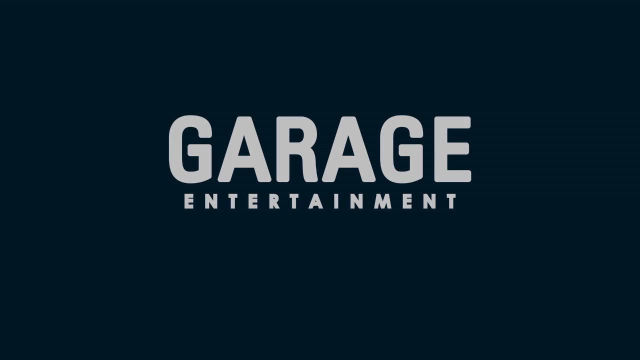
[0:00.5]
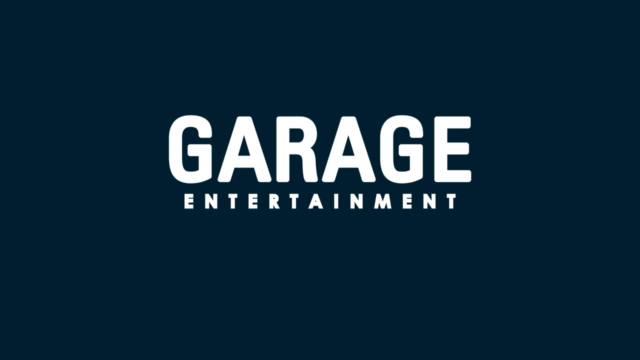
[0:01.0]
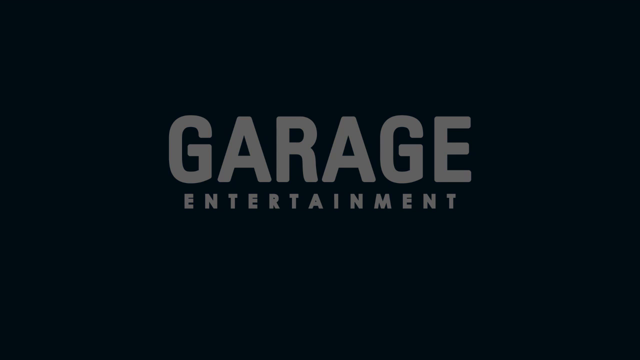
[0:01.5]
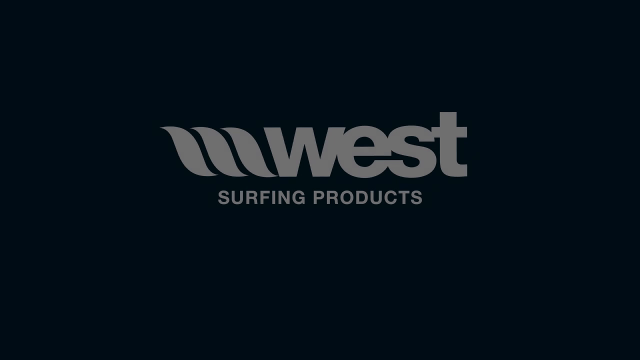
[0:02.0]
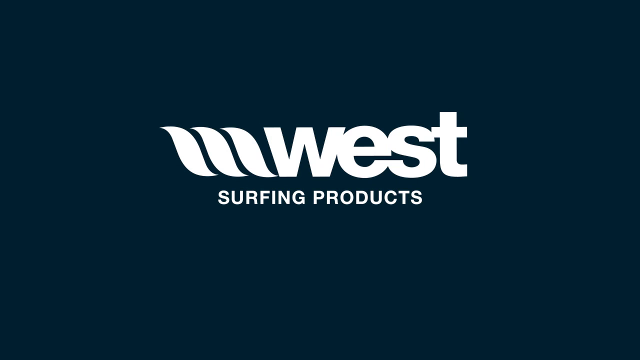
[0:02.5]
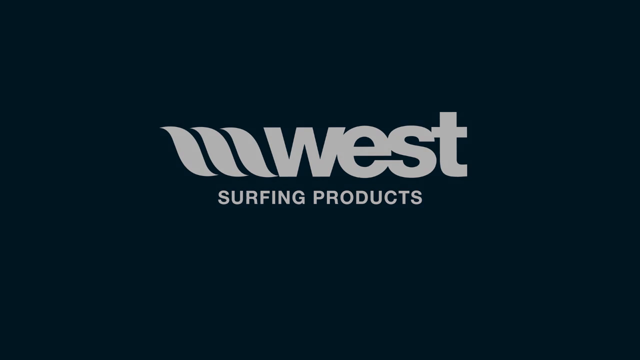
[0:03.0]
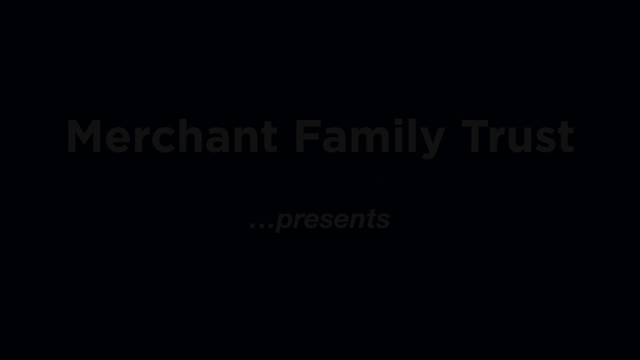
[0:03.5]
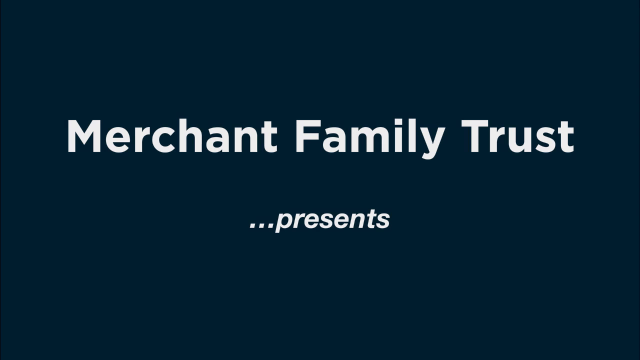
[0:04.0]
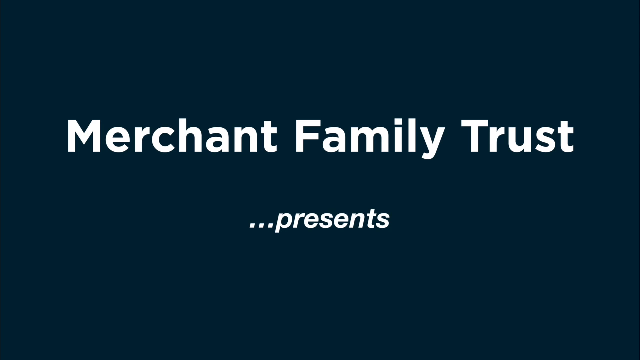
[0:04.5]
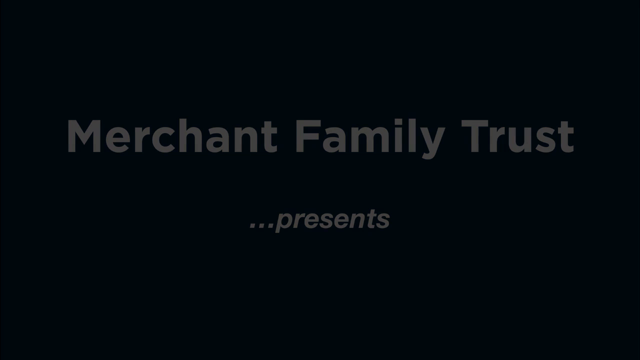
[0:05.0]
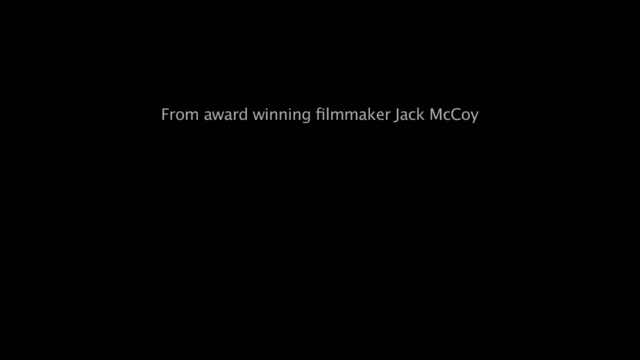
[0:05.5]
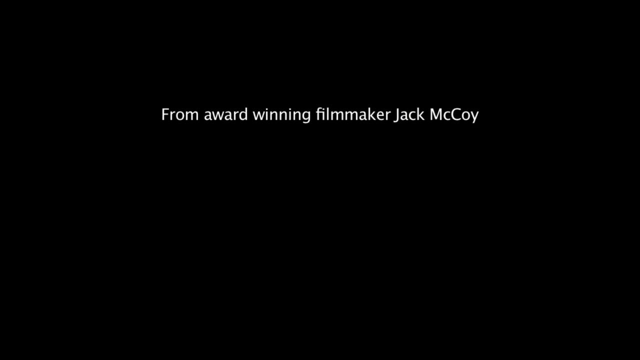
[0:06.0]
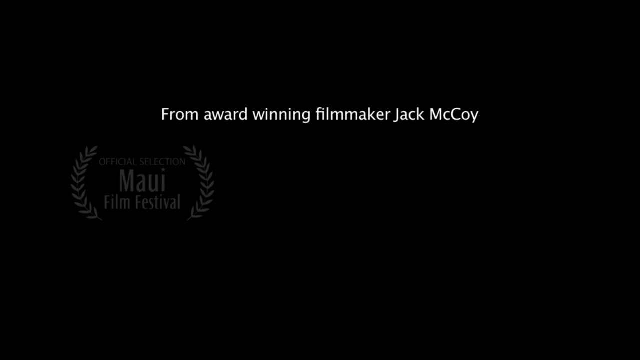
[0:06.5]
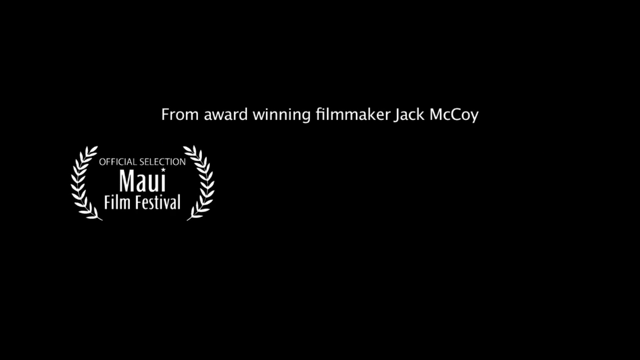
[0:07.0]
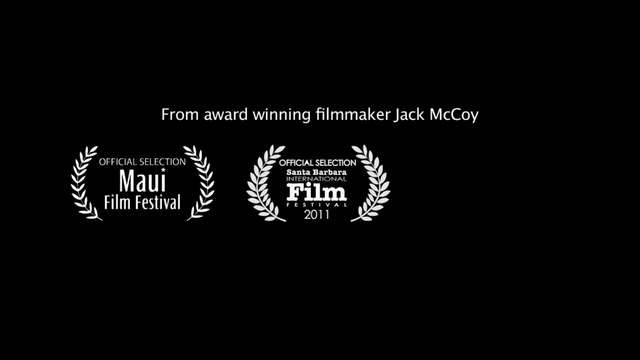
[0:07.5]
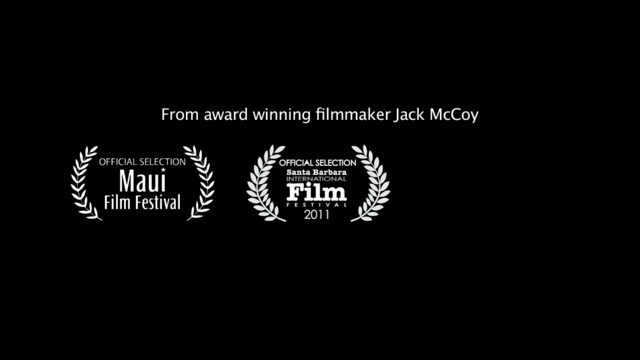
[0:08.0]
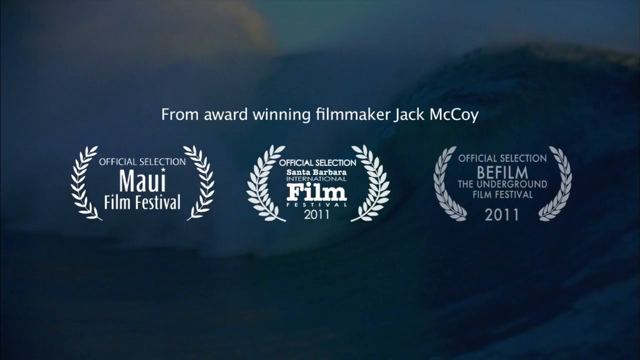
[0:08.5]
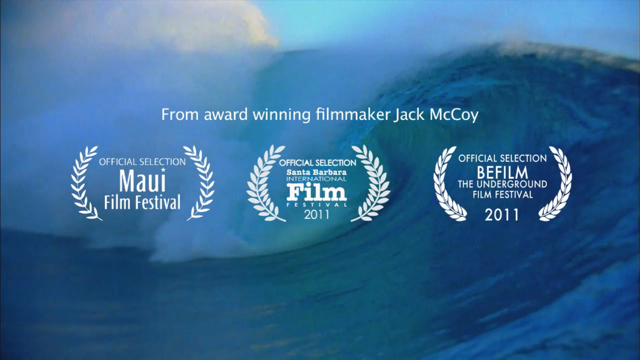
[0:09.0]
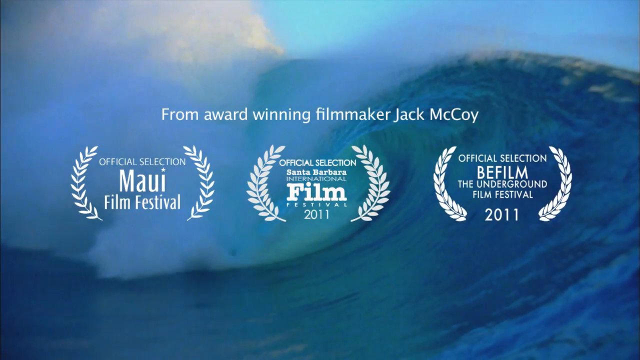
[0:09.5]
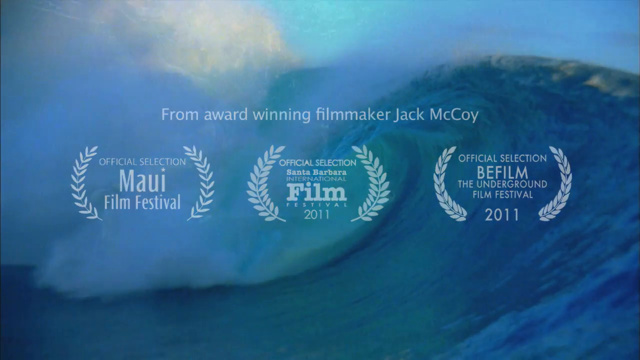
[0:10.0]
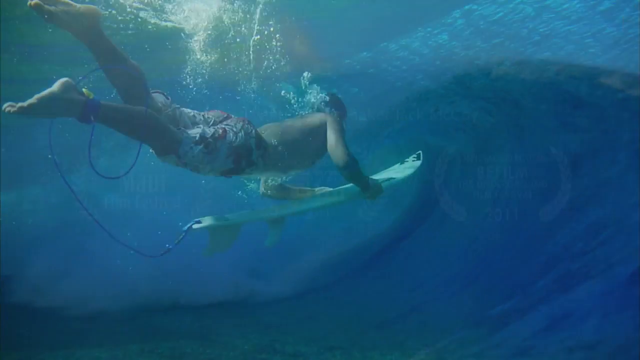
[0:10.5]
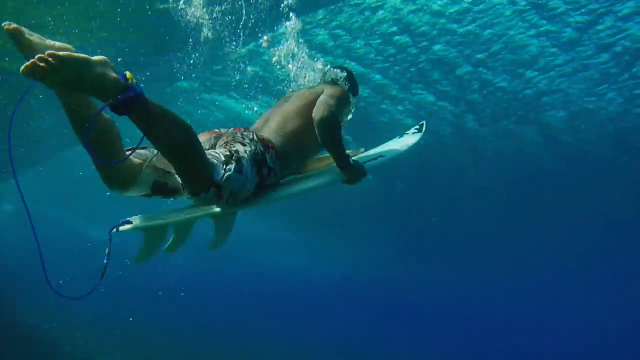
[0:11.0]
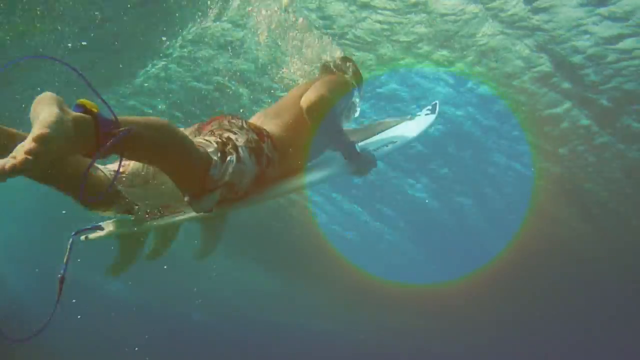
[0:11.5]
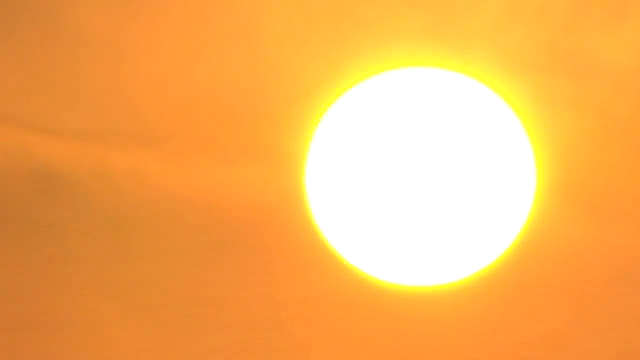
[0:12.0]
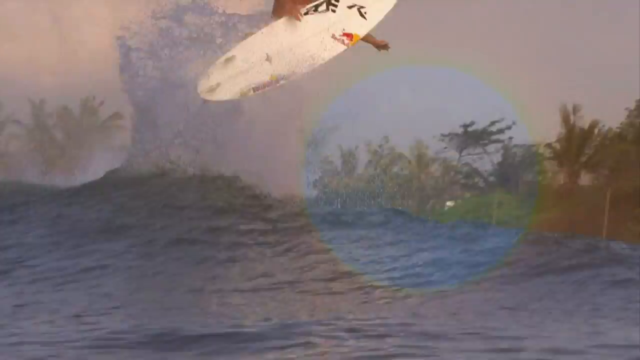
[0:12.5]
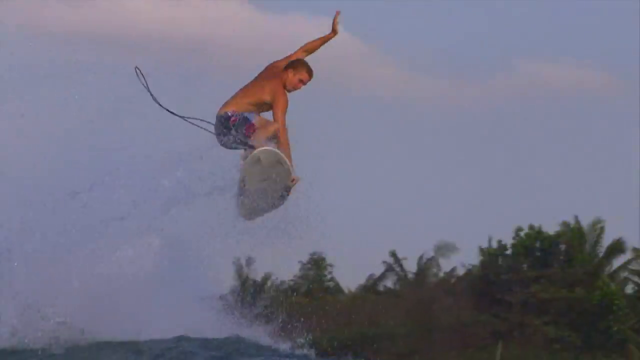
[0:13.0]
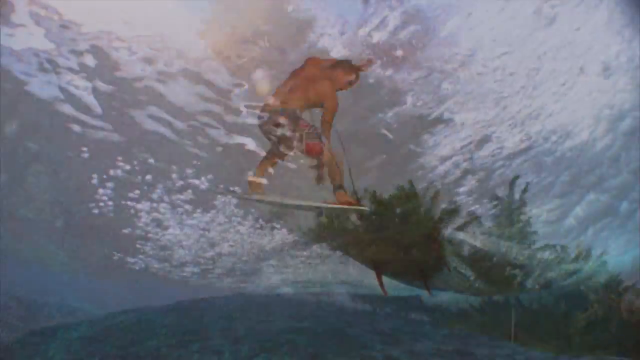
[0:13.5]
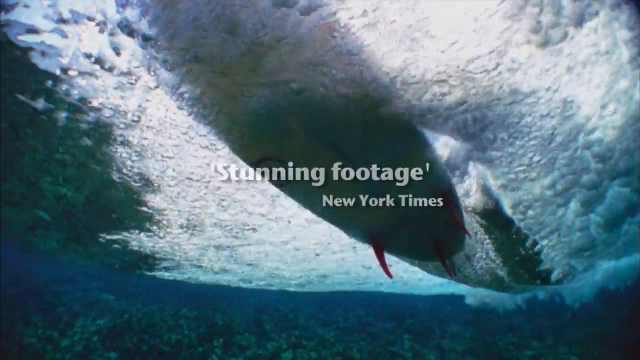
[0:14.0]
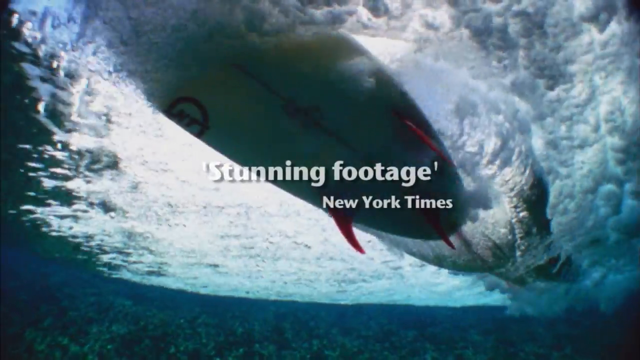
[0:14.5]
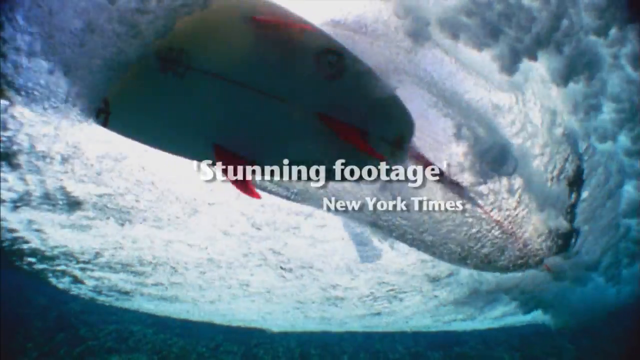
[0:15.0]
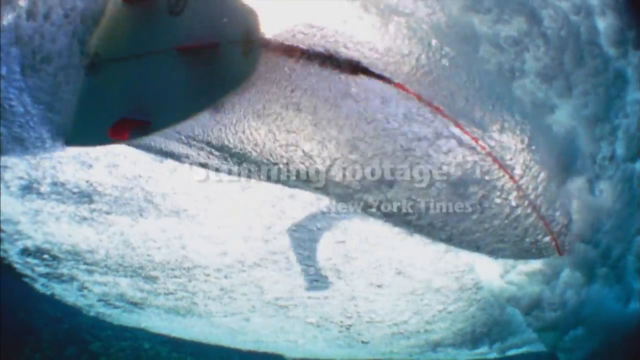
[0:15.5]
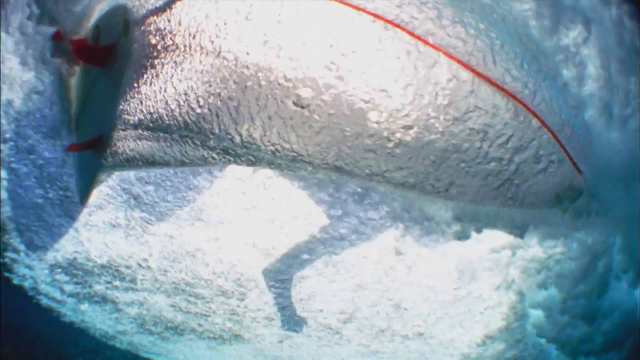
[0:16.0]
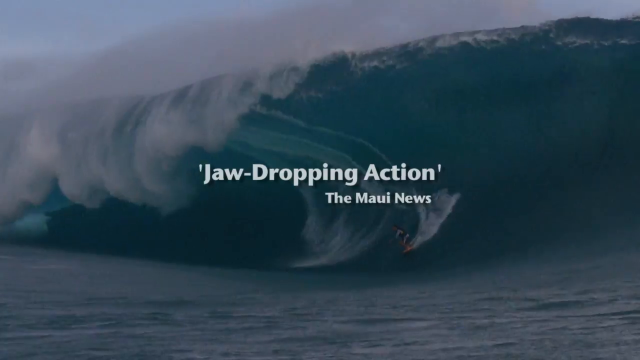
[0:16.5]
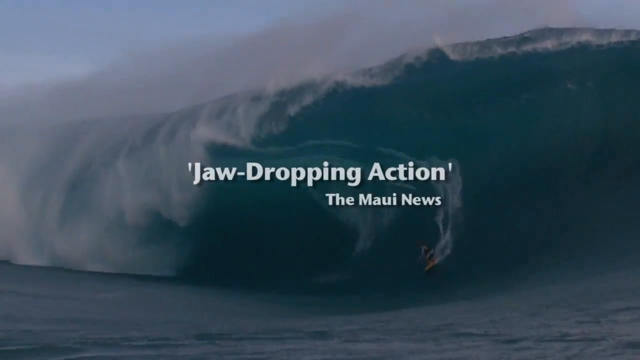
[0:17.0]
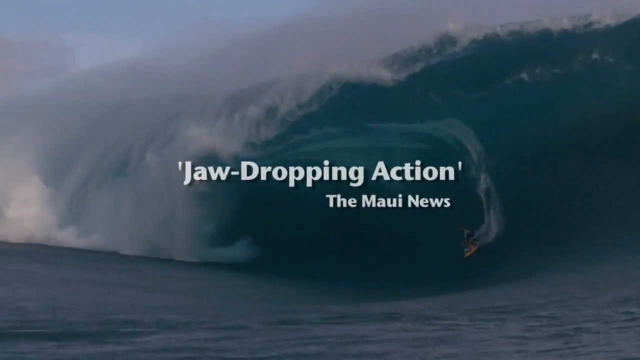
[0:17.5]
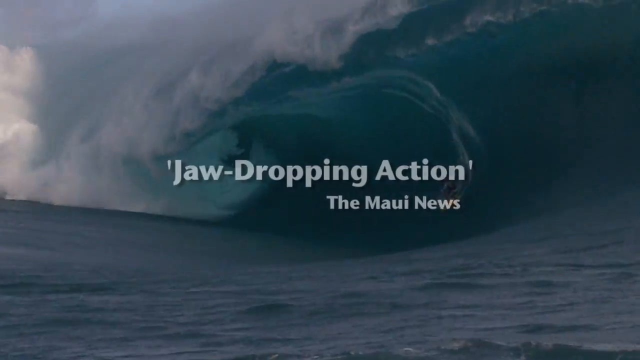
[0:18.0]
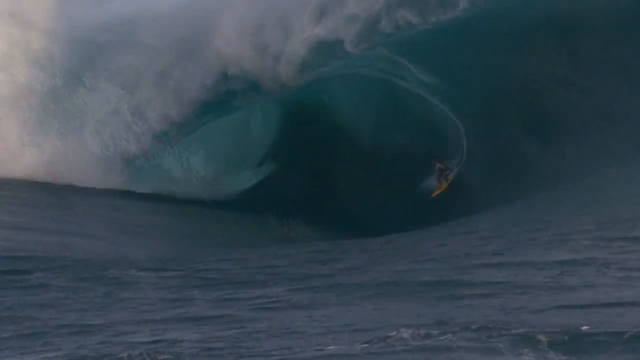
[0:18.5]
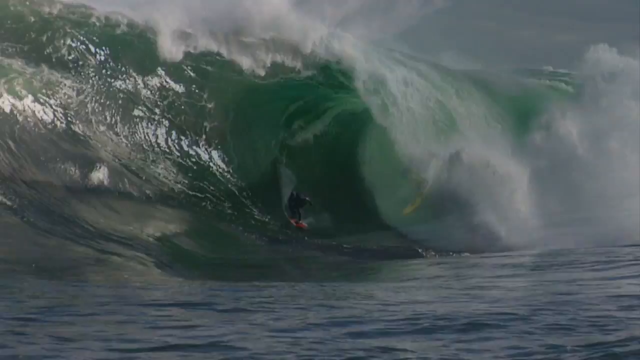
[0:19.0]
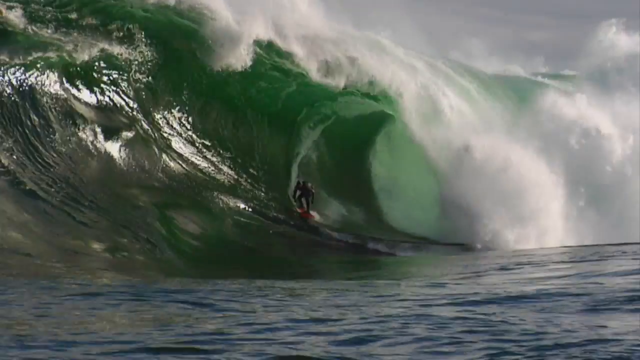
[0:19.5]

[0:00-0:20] Text at the beginning of the video reads "garage entertainment west surfing products merchant family trust presents from award-winning filmmaker Jake McCoy". Awards at the bottom of the screen list an official selection at the Maui Film Festival, an official selection at the Santa Barbara International Film Festival 2011, and an official selection for B Film the Underground Film Festival 2011. A wave crashes in from the right of the screen to the left, curling over from right to left in a shape like a back-to-front letter C. The water is a very magnificent blue. A man swims under the water on a sort of surfboard, attached to it by a blue cable around his ankle; the surfboard has three fins, almost like upside-down shark fins. The screen then shows the sun, a vibrant orange sun so vibrant it is almost white. The person leaps from the water and flies through the air. A quote from the New York Times appears, reading "Stunning footage and jaw-dropping action from the Maui News".